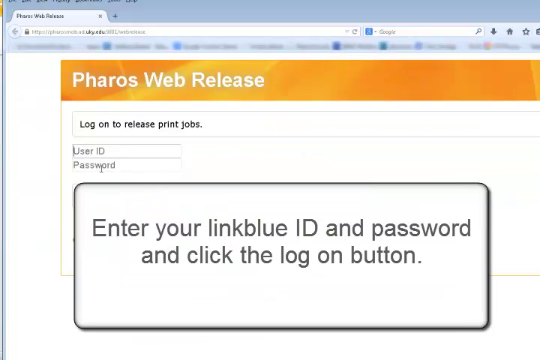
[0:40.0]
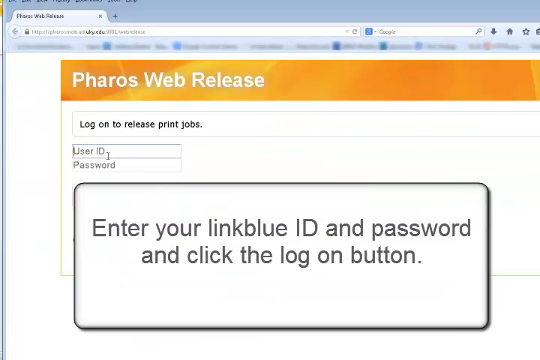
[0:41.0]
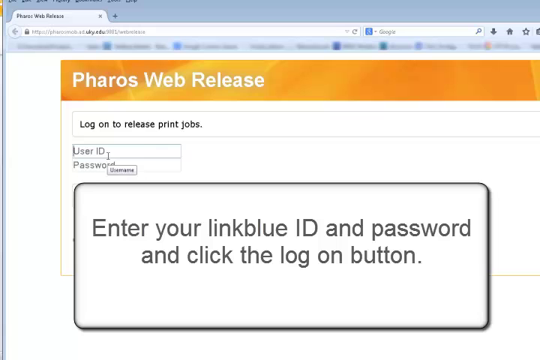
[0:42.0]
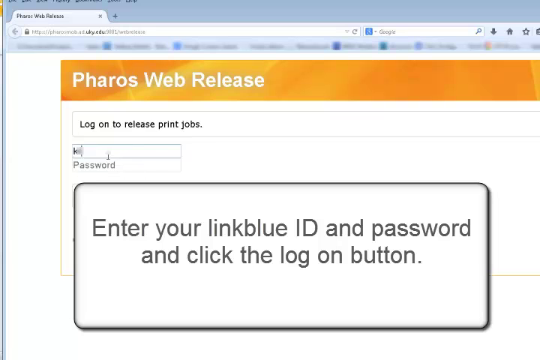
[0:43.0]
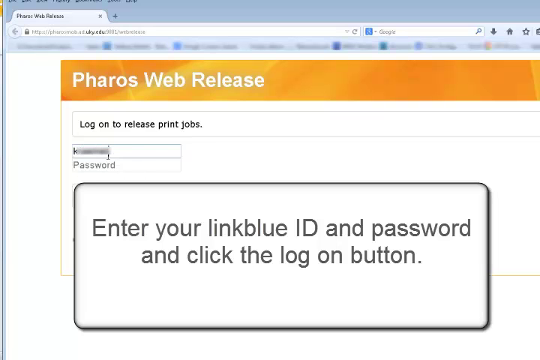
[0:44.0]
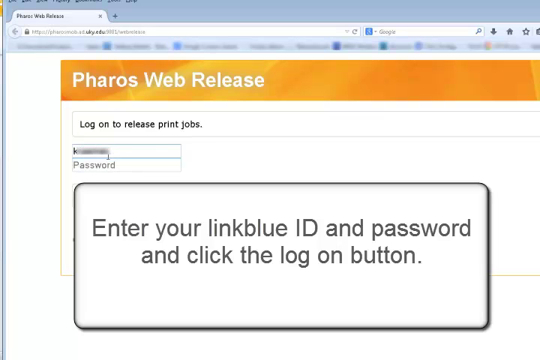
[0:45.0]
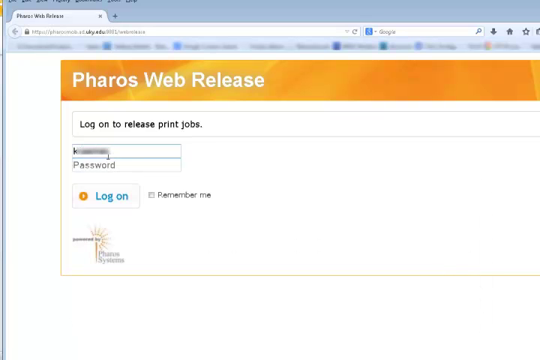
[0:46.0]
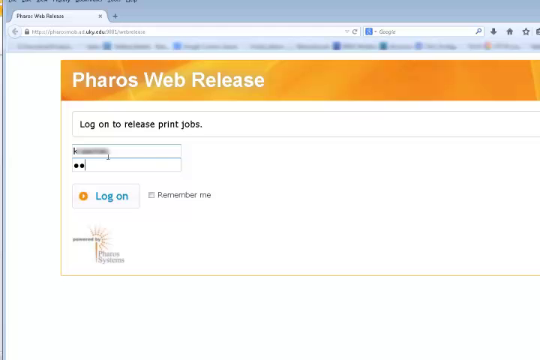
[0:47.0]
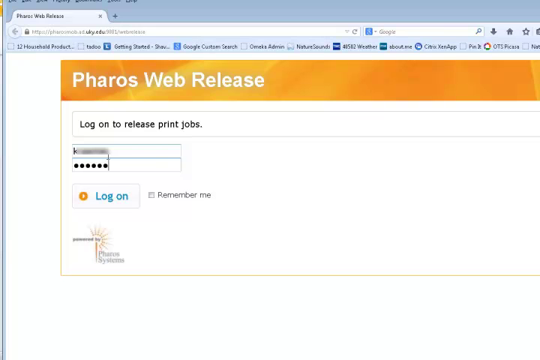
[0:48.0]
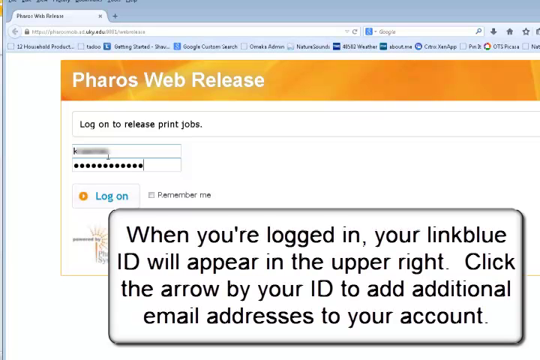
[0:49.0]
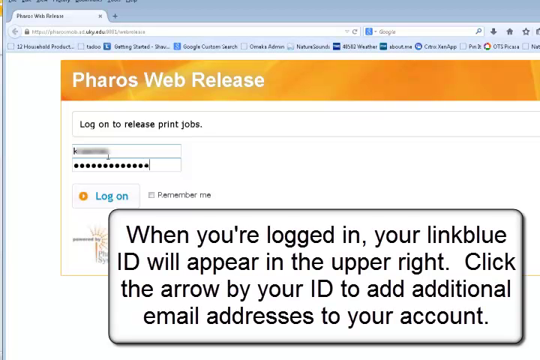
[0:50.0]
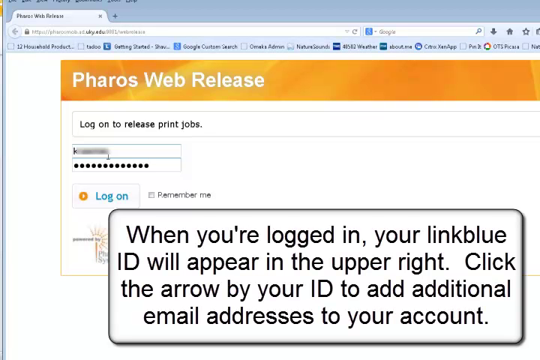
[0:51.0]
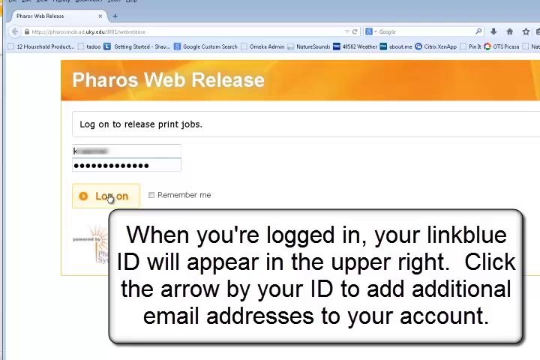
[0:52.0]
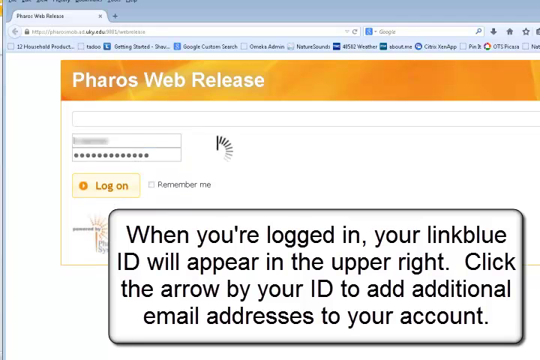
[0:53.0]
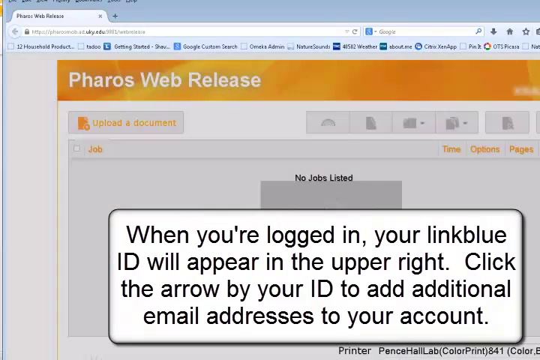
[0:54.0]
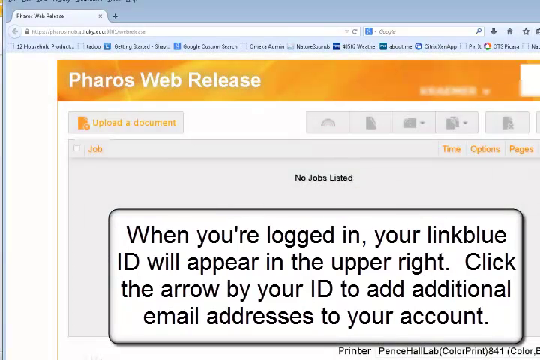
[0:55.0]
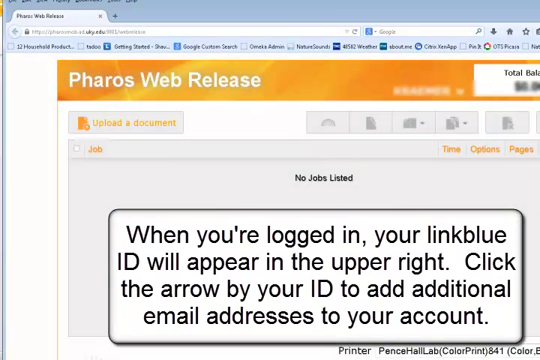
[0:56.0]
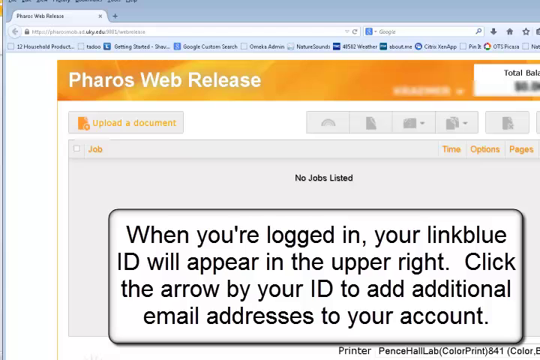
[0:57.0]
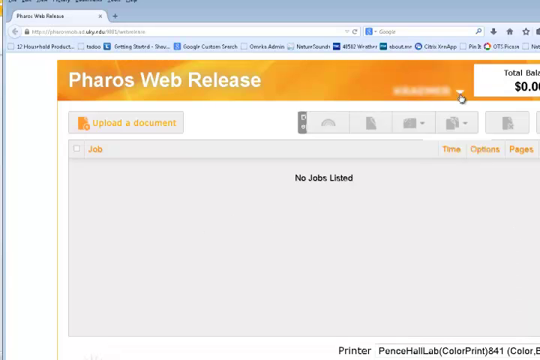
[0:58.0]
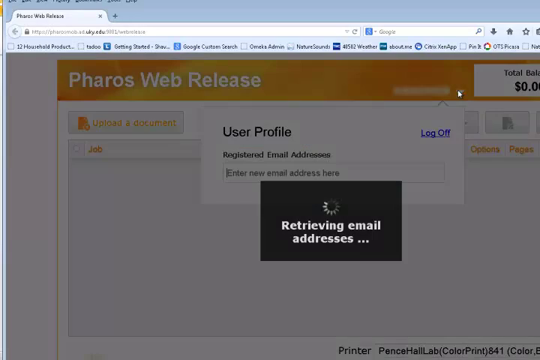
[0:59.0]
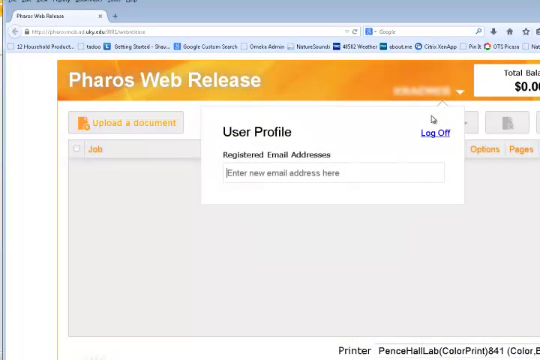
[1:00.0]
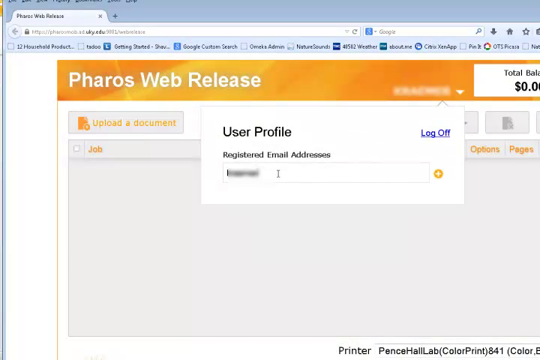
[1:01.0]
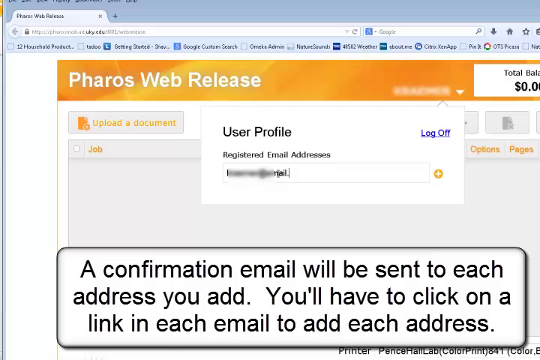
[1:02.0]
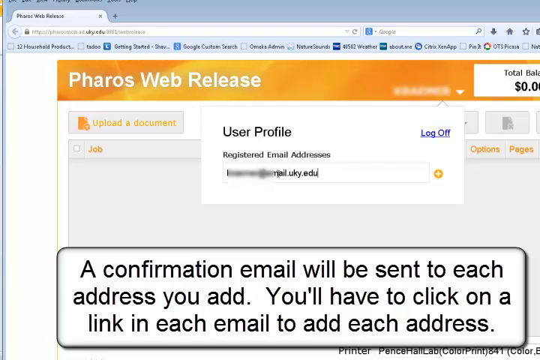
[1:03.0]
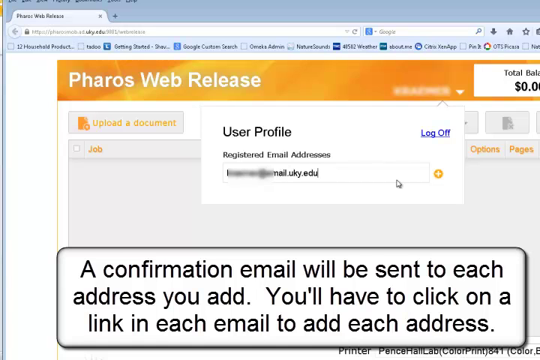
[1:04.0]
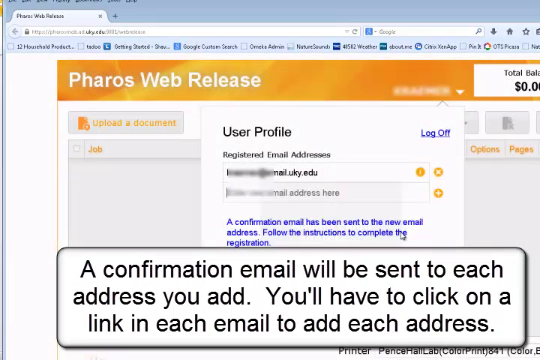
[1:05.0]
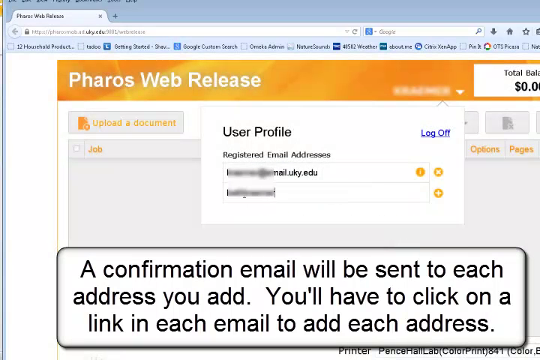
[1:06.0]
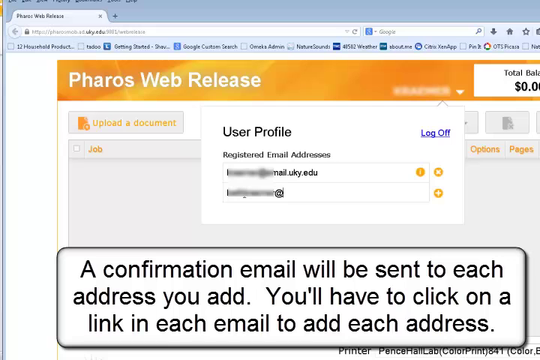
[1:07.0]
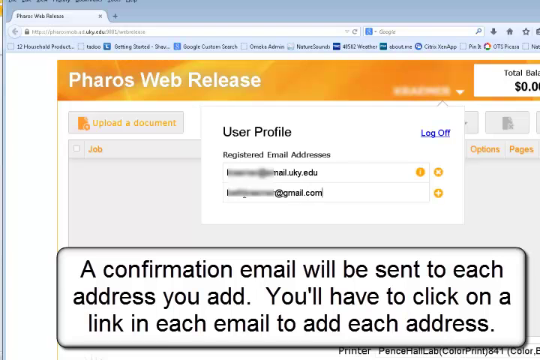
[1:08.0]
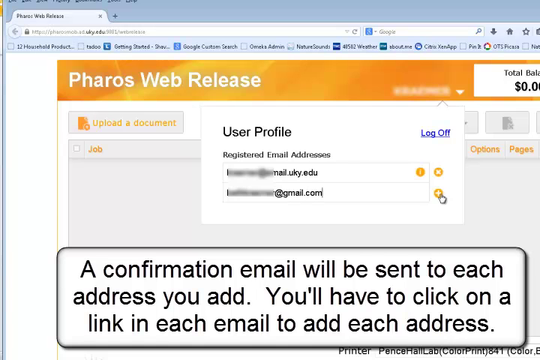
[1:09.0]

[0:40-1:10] The video shows how to sign up for printing remotely through the University of Kentucky library. The person is in their email, at the step labeled "Pharos web release", shown as a banner pop-up window that says "log on to release print jobs" and "enter your link blue ID and password and click the log on button". The cursor types this in, and the entry is blurred out; the person then types in what appears to be a password. Text reads "when you're logged in, your link blue ID will appear in the upper right. Click the arrow by your ID to add additional email addresses to your account." The screen then says "no jobs listed", with a button to upload a document. The person clicks a dropdown reading "user profile, registered email address", and what they enter is blurred out. There is also a log off button. Text reads "a confirmation email will be sent to each email address you add."